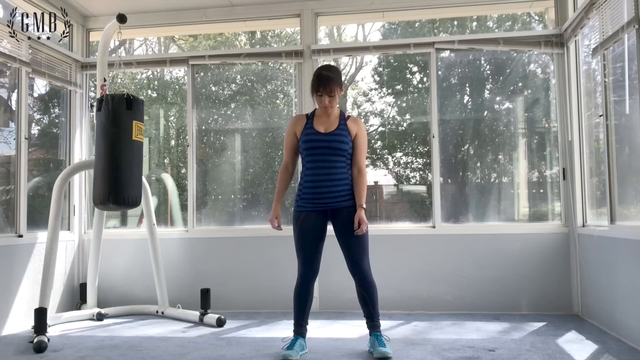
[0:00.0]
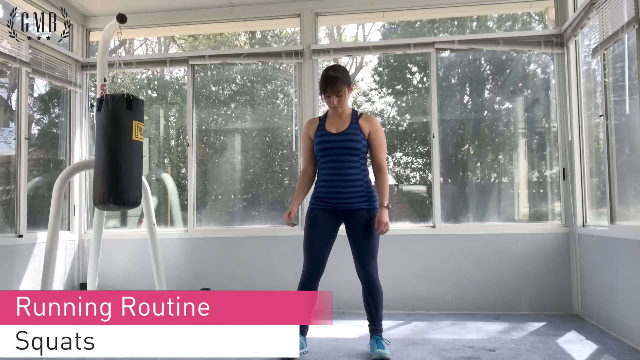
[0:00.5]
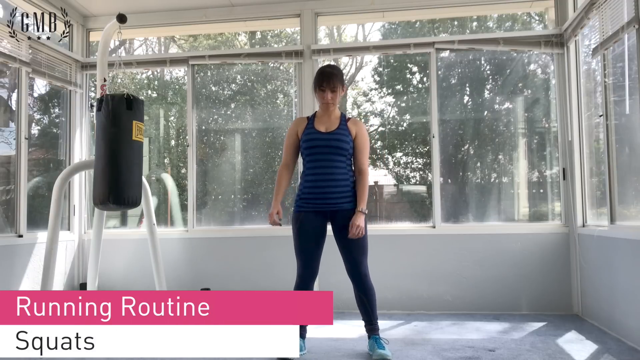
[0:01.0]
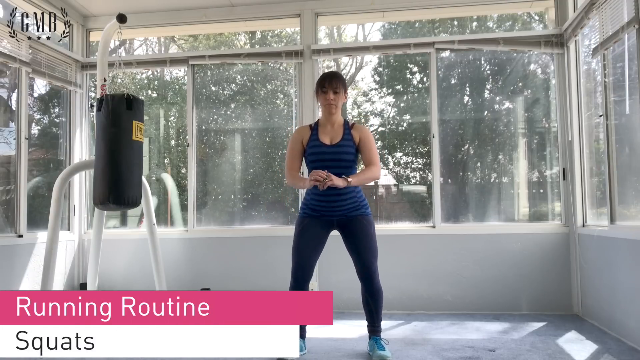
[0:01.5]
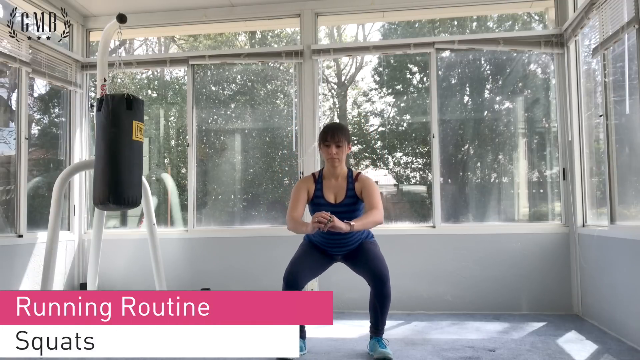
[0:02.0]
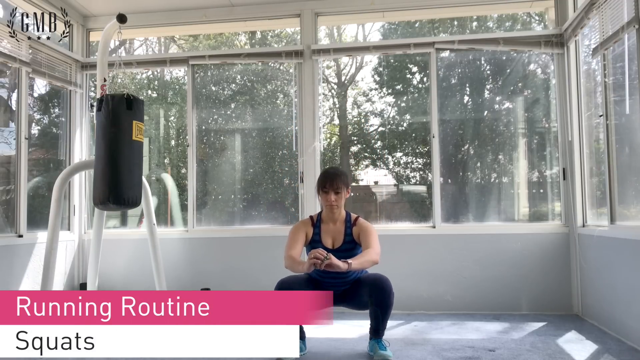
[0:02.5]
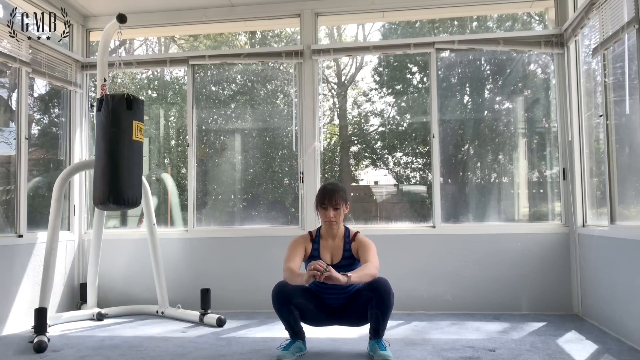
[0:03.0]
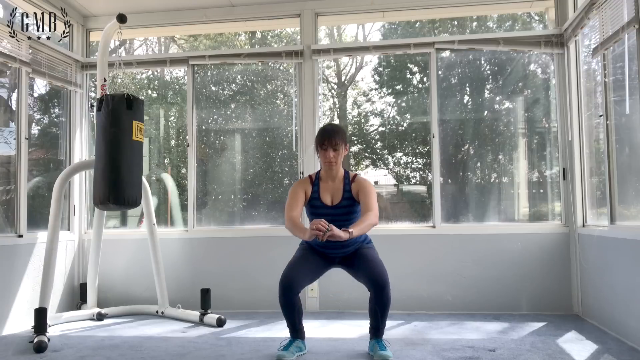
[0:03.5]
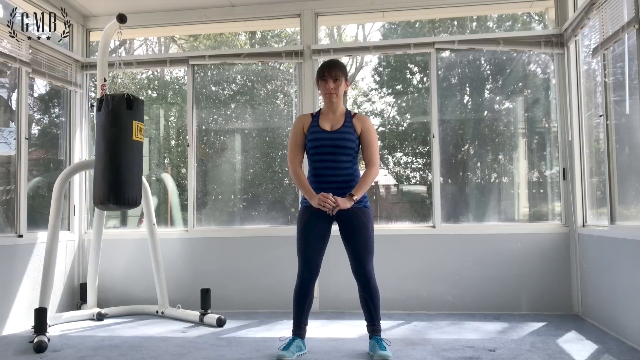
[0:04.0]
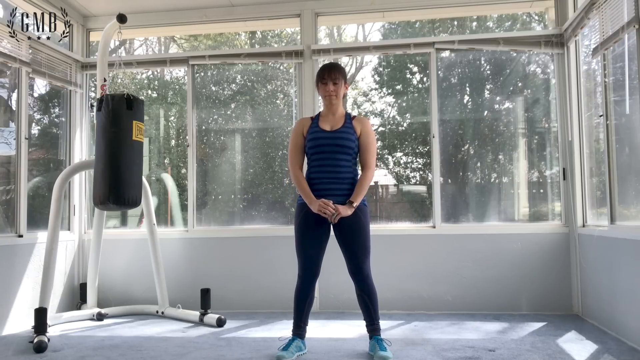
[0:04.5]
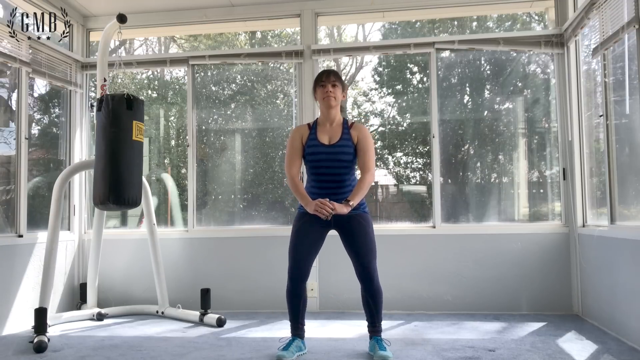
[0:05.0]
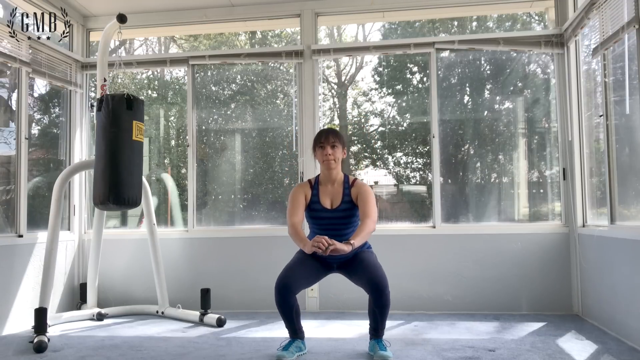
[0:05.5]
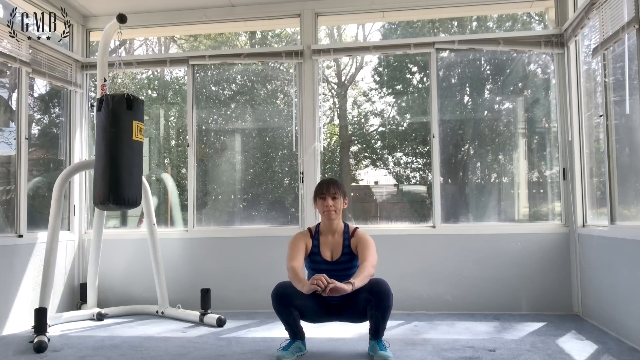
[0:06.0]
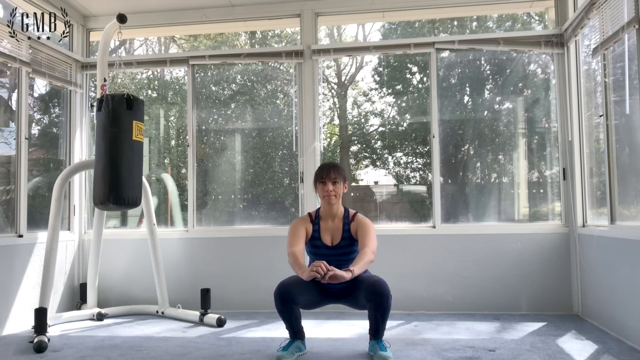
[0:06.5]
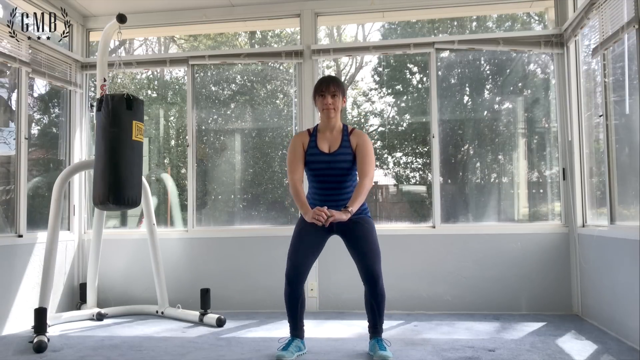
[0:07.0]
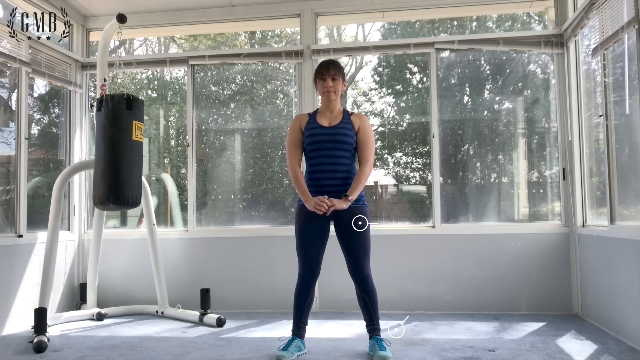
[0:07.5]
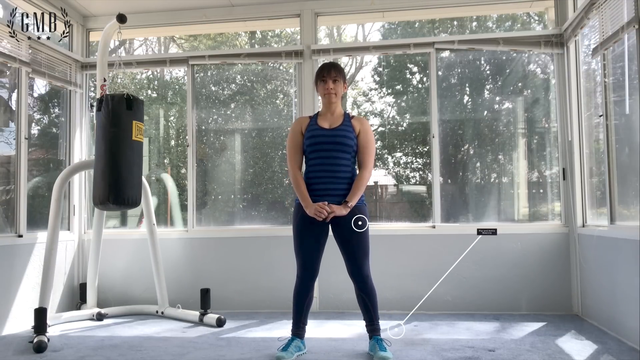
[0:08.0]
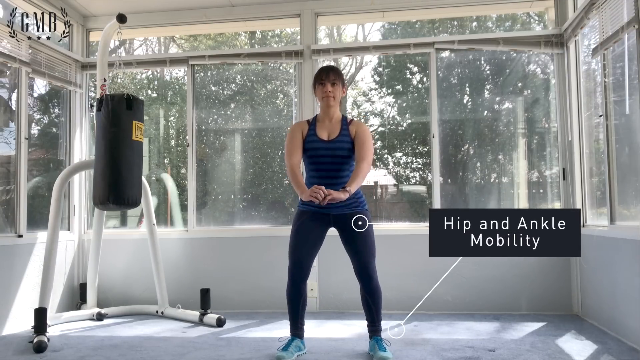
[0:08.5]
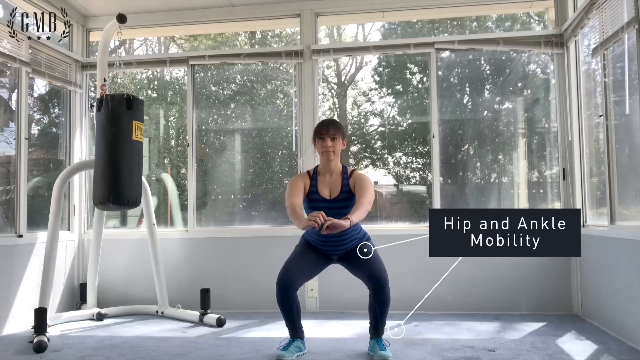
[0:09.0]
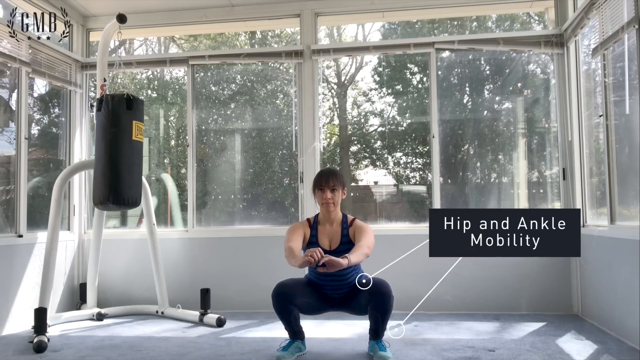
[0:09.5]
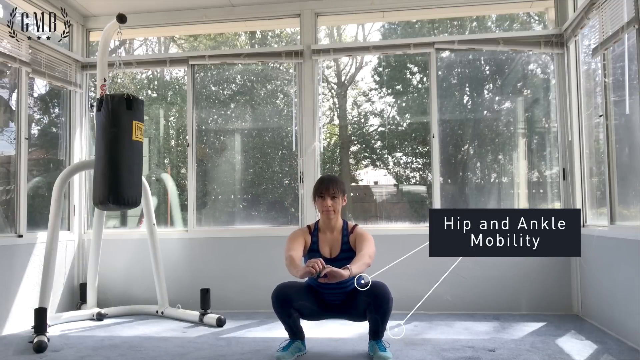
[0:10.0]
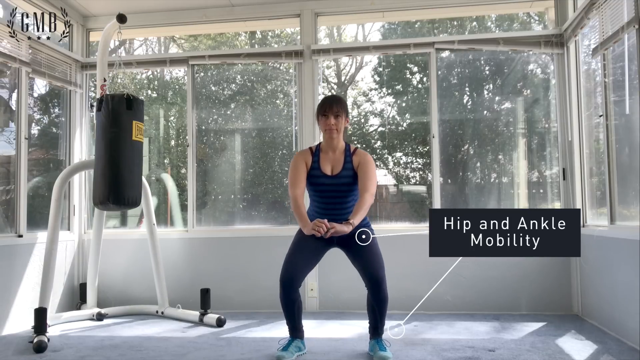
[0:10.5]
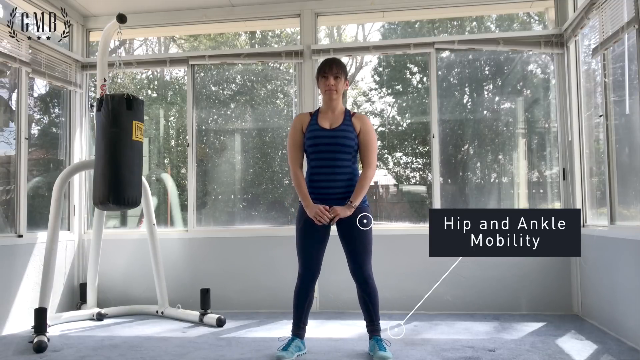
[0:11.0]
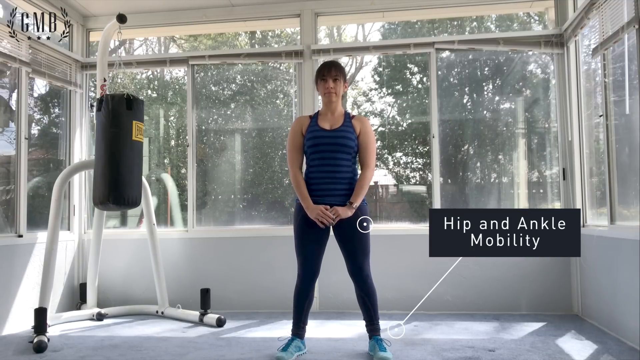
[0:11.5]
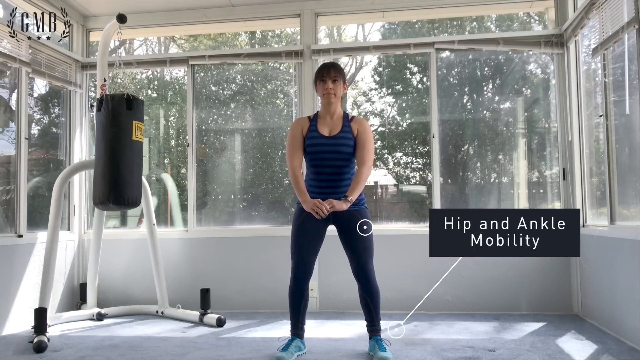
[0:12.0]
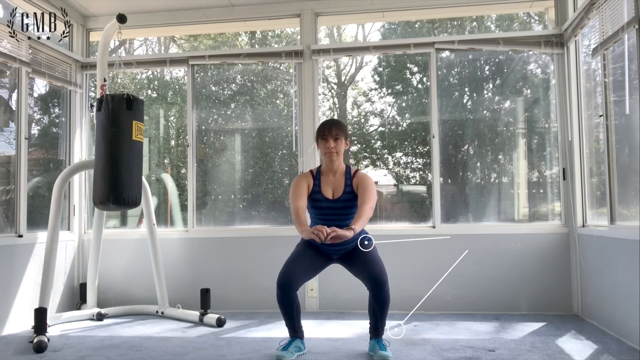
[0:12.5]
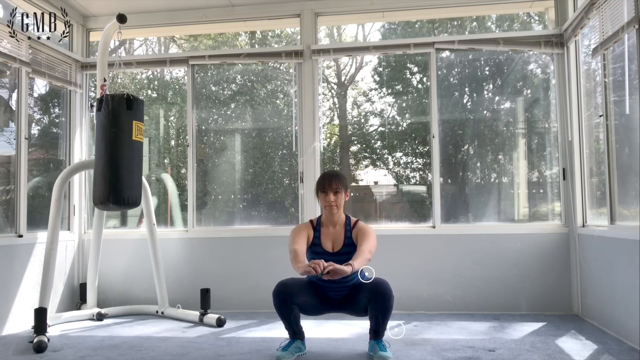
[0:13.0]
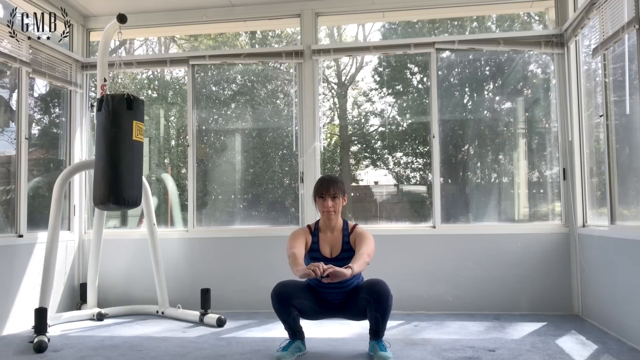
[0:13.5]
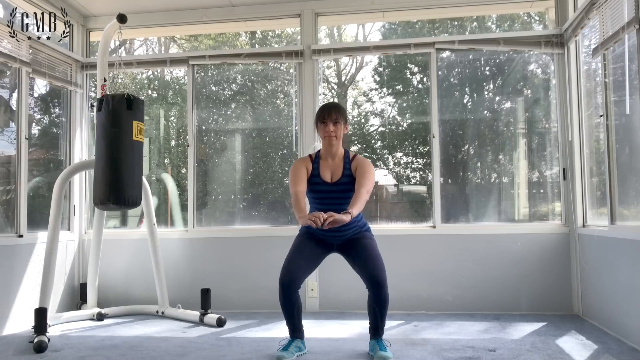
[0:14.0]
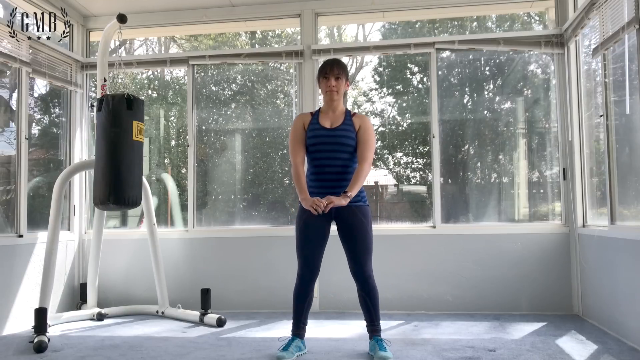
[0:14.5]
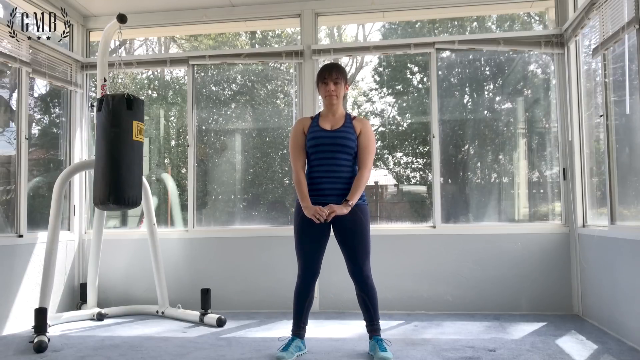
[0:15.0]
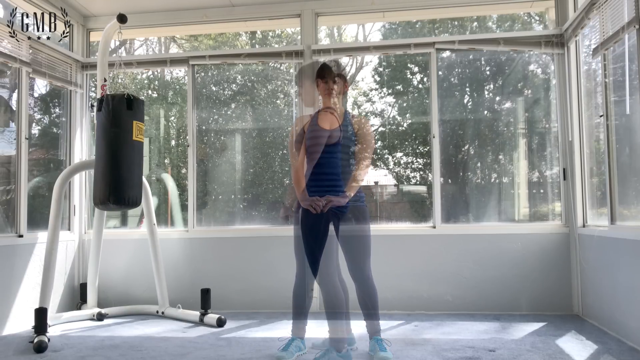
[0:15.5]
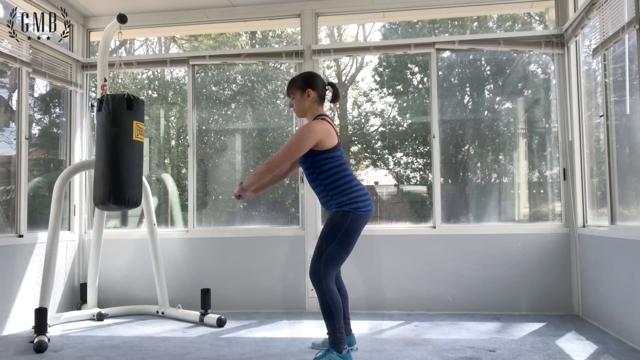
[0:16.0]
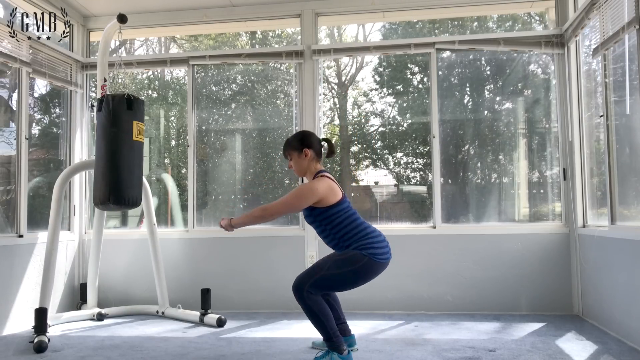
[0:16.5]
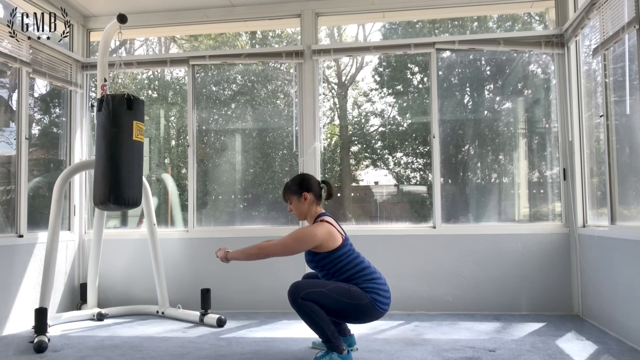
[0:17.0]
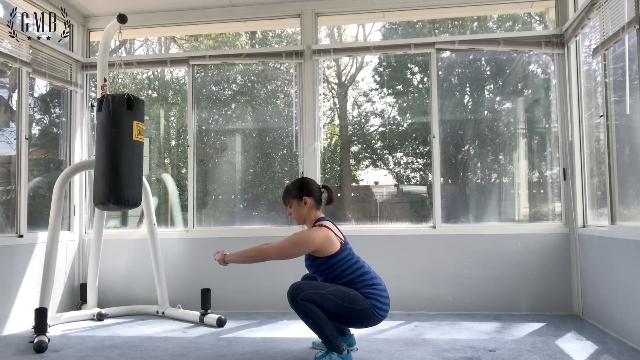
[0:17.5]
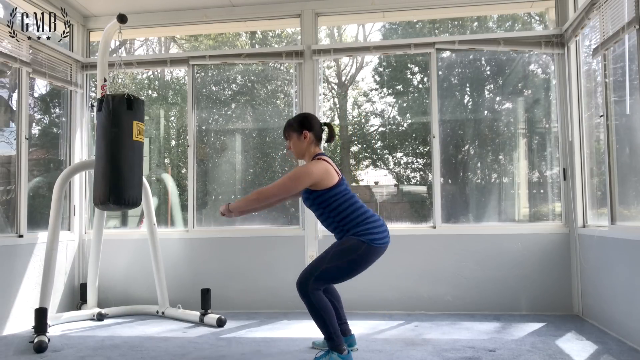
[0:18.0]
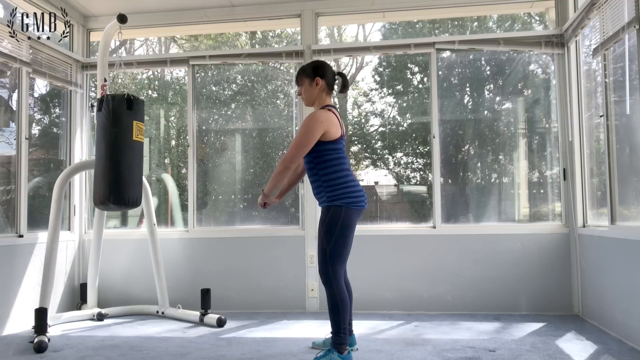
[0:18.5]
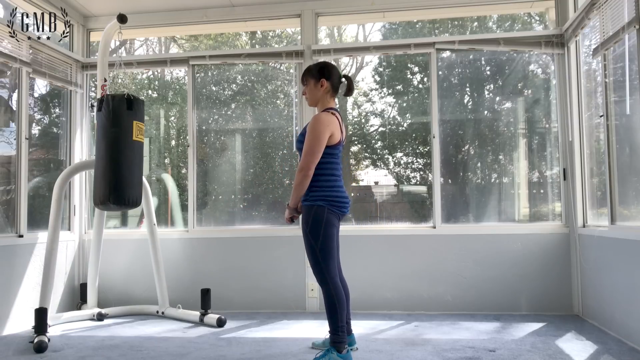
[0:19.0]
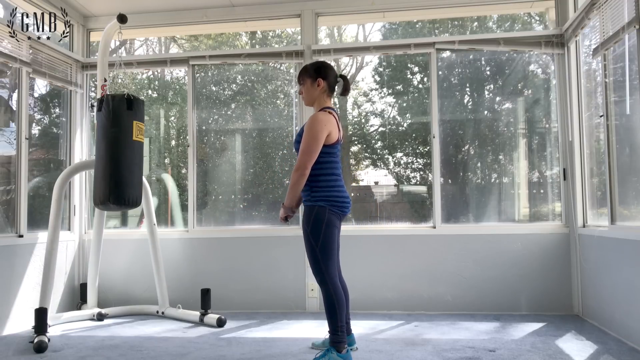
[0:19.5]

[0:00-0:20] The video starts with a young woman with dark hair, wearing a striped blue and black tank top and tight pants, standing in a room with windows all around and a boxing bag on the left side. She stands with her legs spread open and her arms hanging down, and moves around just a little to get her balance. She holds her hands out in front of her as she squats down with her bottom almost touching the ground. The shot then transitions to her doing the same movement, but now facing toward the left, where the boxing bag is. When she turns, a ponytail is visible on the back of her head. A banner pops up at the bottom of the screen that says "Running Routine." She wears light blue shoes. As she goes down and up, lines come up from her hip and from her shoes, and at the end of the line are the words "hip and ankle mobility."